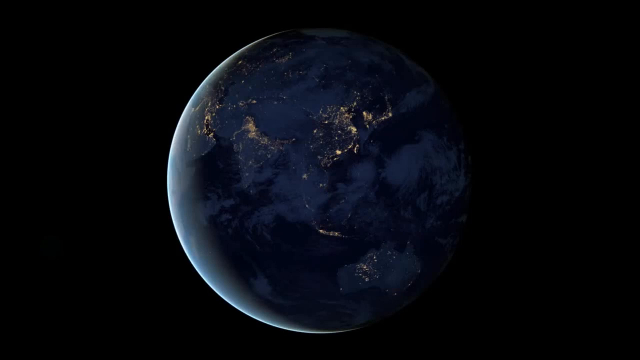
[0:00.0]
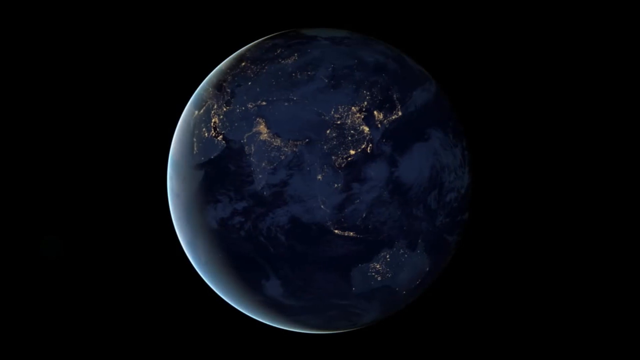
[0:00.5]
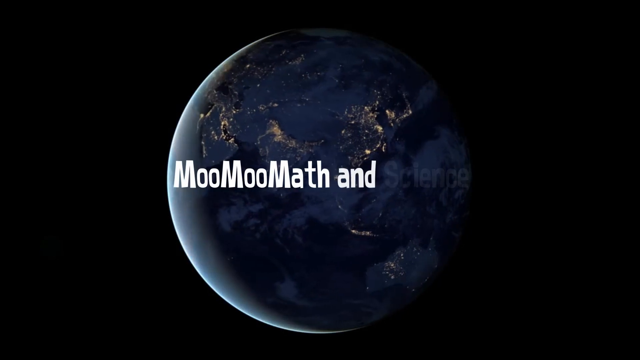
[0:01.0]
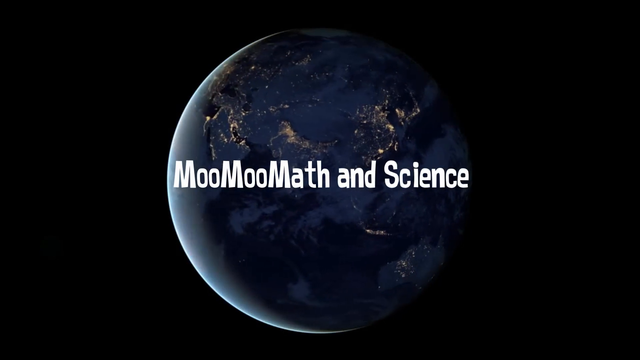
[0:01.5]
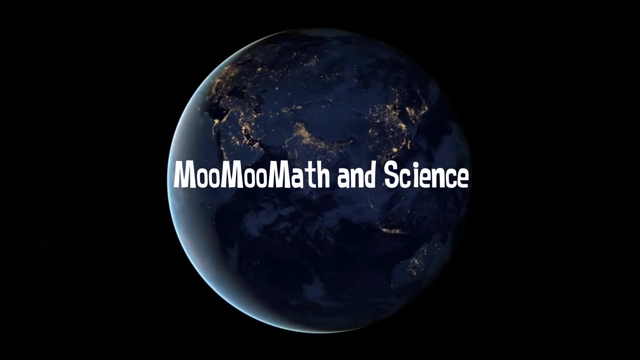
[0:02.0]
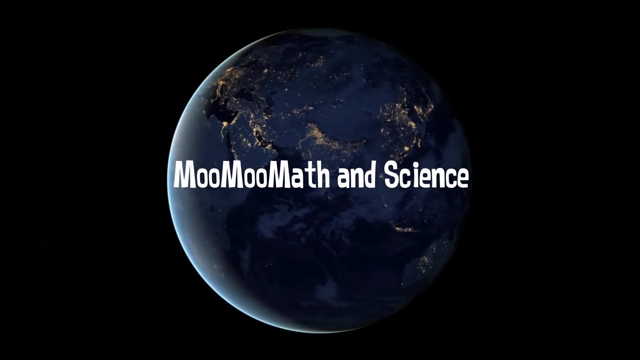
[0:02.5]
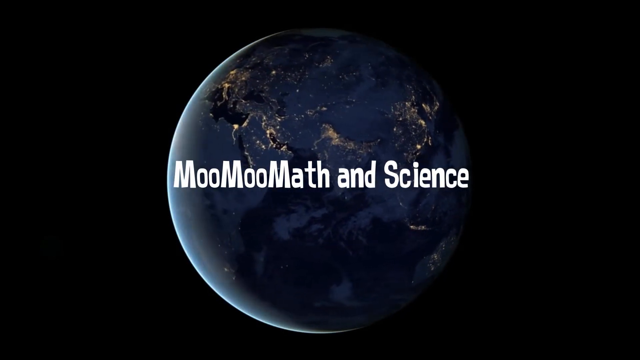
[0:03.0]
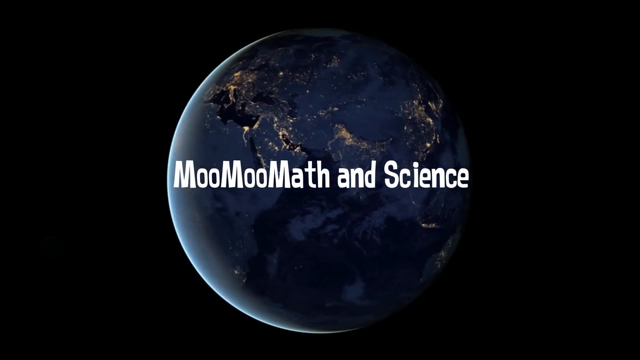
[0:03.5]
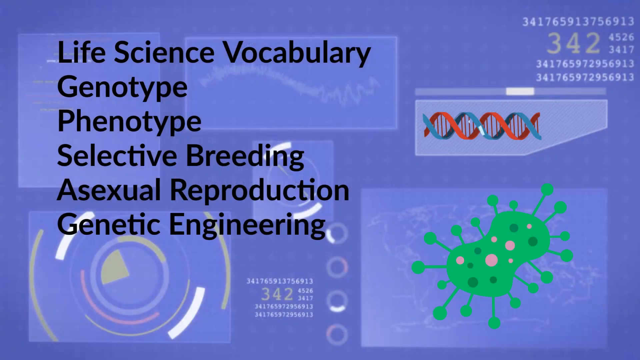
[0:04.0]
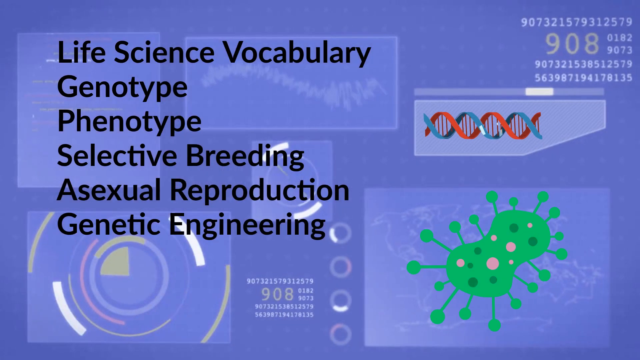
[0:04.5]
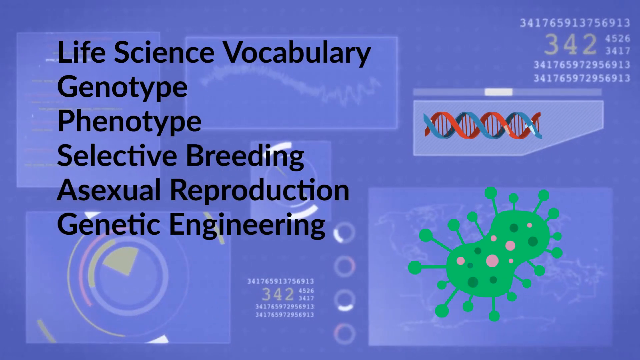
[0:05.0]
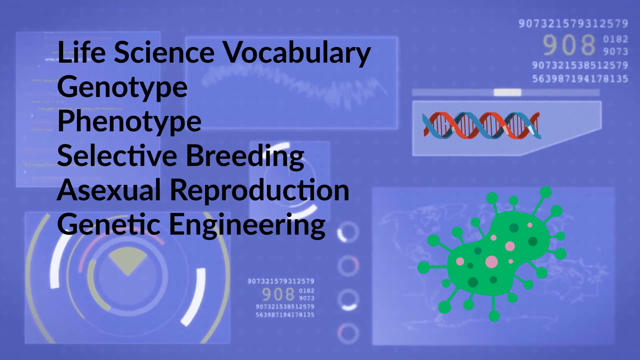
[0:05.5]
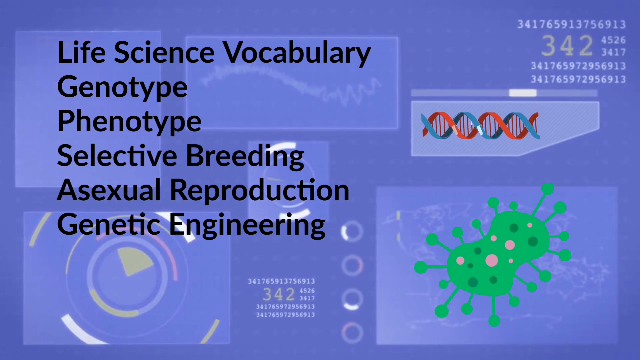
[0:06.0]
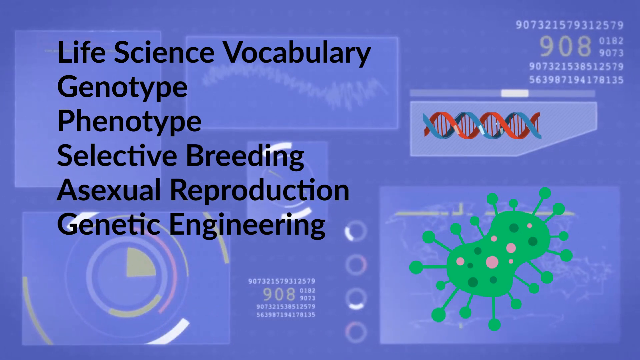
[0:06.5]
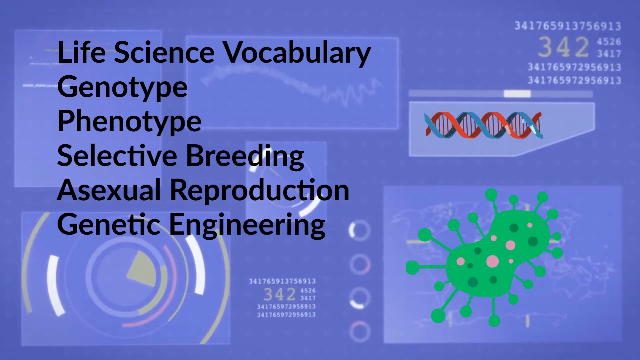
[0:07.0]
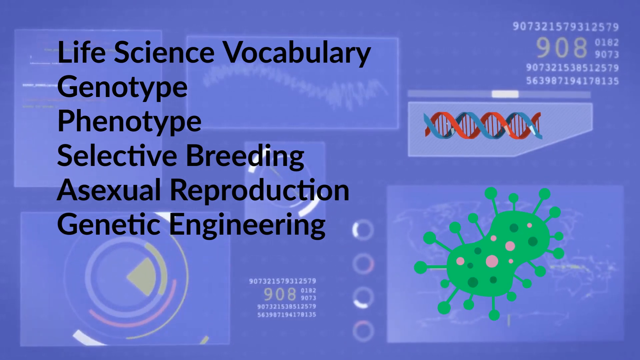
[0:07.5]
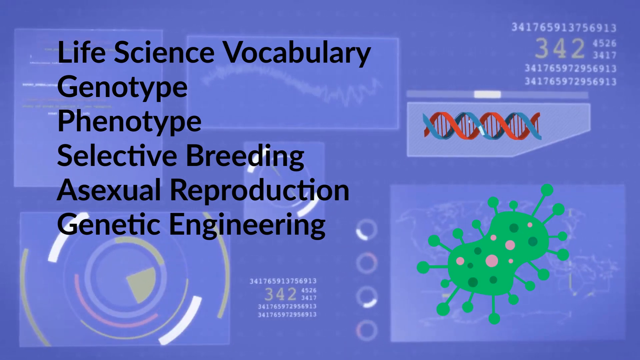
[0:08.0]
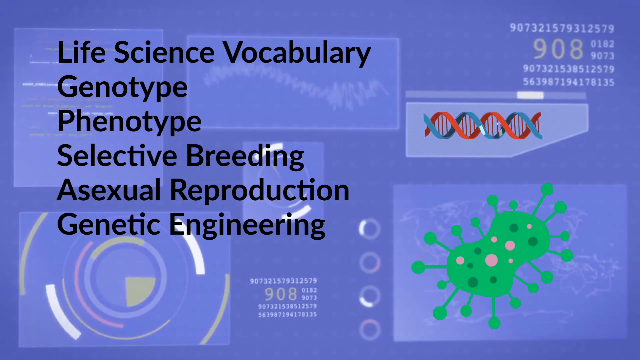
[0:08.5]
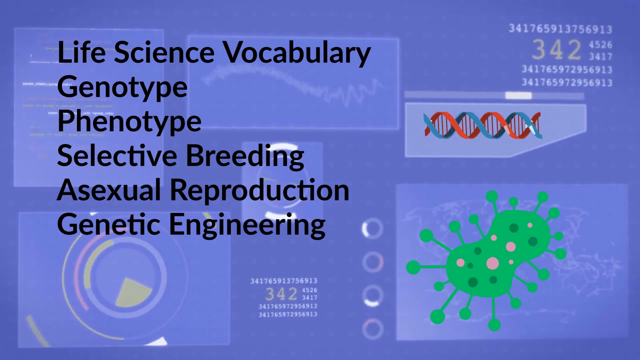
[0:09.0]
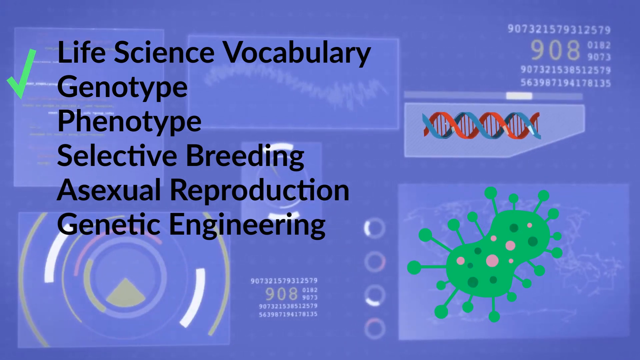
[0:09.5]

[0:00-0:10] The video shows the terms genotype, phenotype, selective breeding, asexual reproductions and genetic engineering. Images such as DNA structures appear, and the video shows the world, the planet. A lot of information follows.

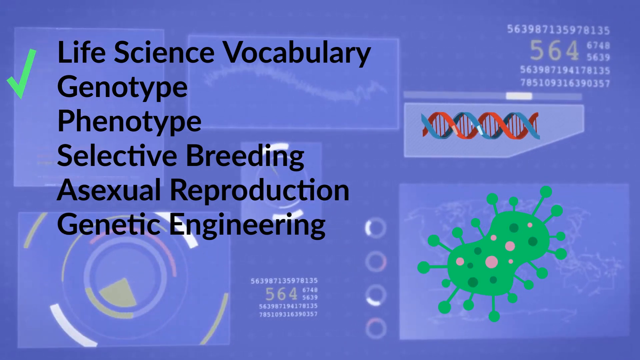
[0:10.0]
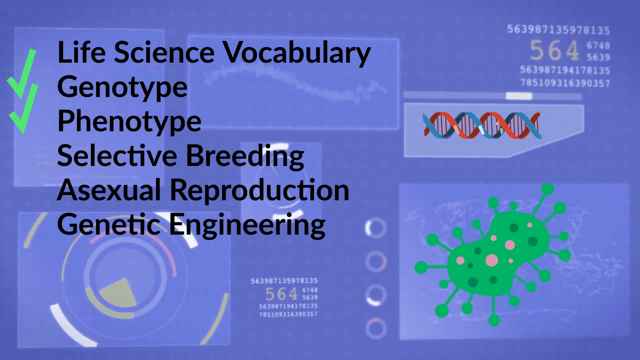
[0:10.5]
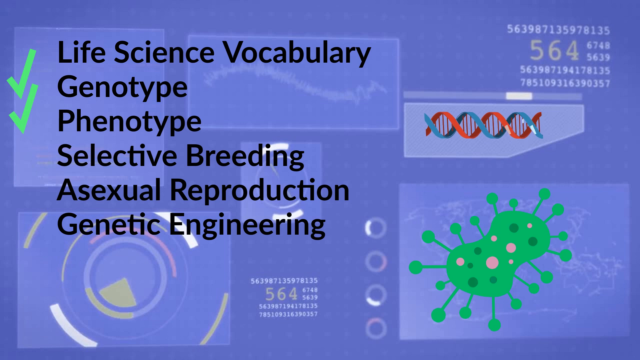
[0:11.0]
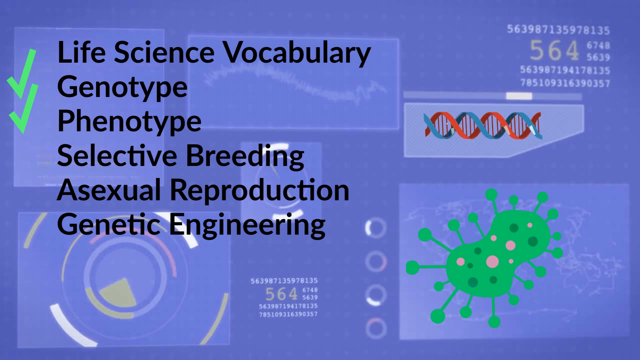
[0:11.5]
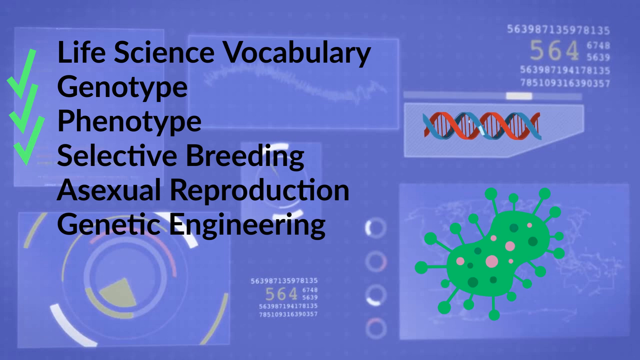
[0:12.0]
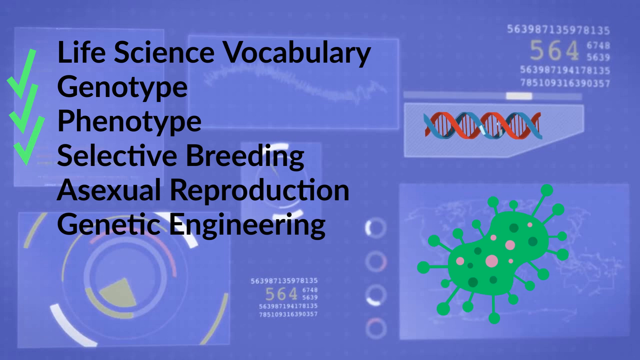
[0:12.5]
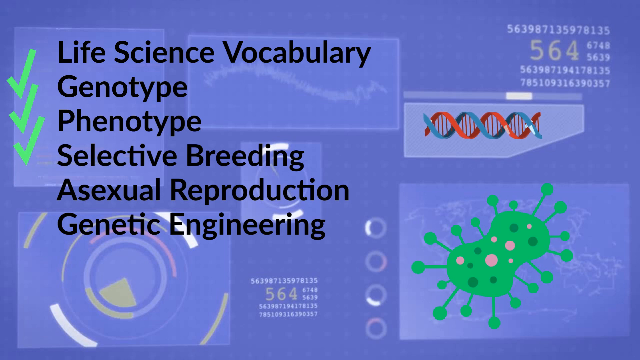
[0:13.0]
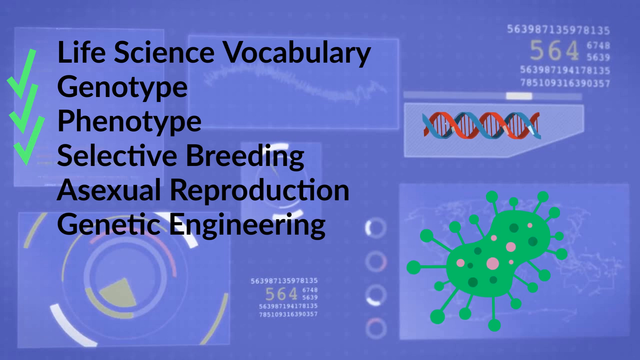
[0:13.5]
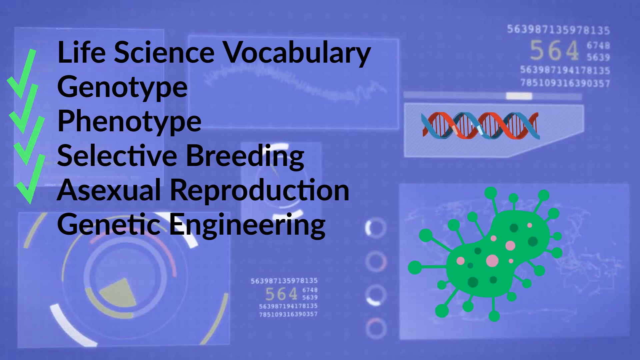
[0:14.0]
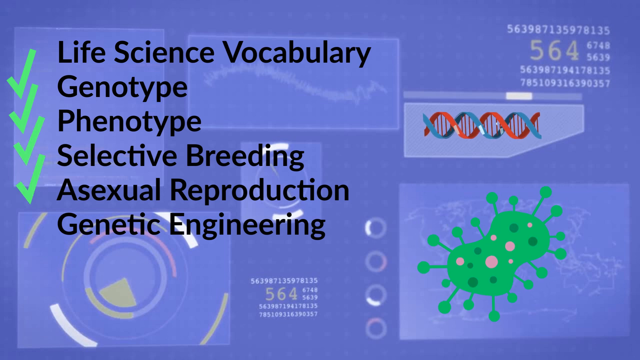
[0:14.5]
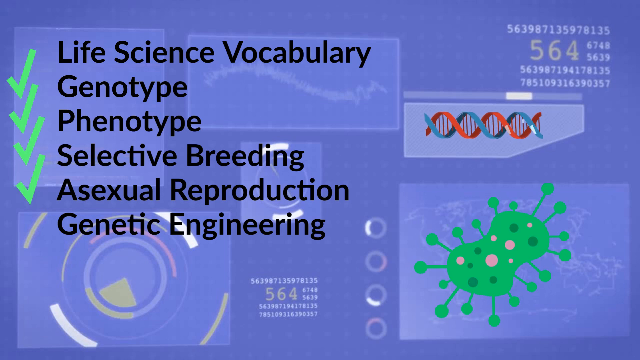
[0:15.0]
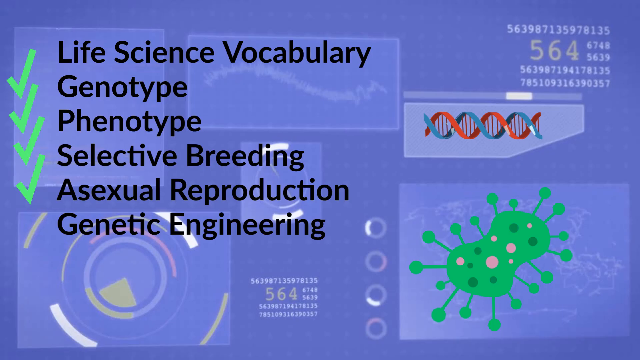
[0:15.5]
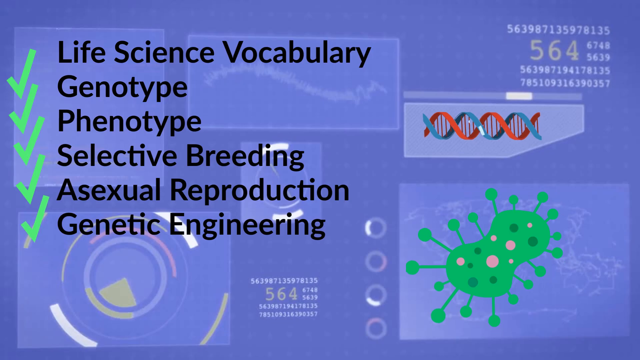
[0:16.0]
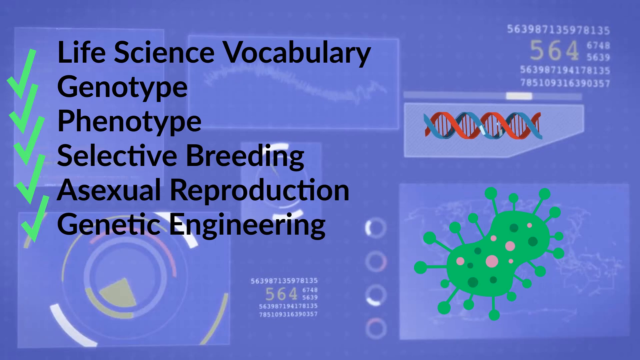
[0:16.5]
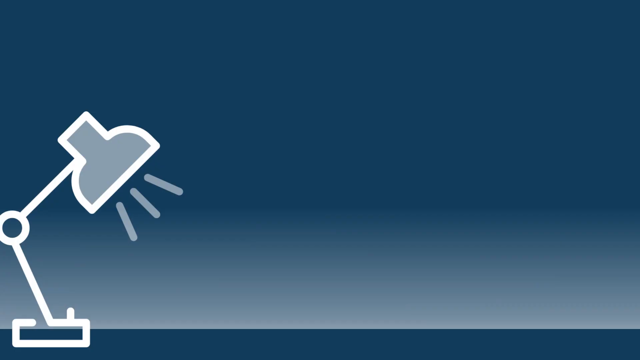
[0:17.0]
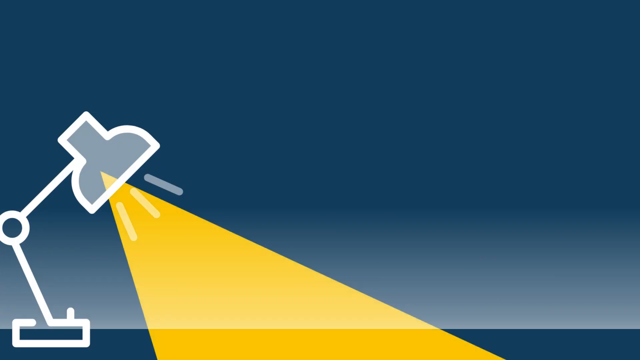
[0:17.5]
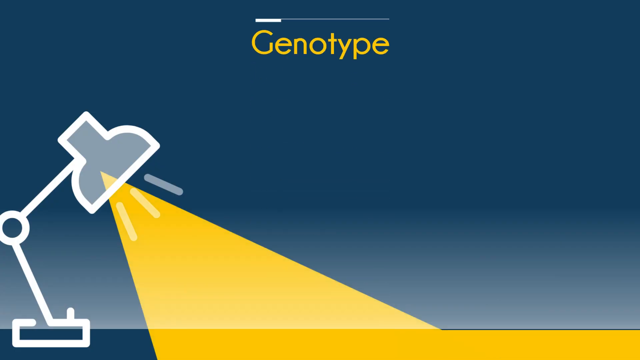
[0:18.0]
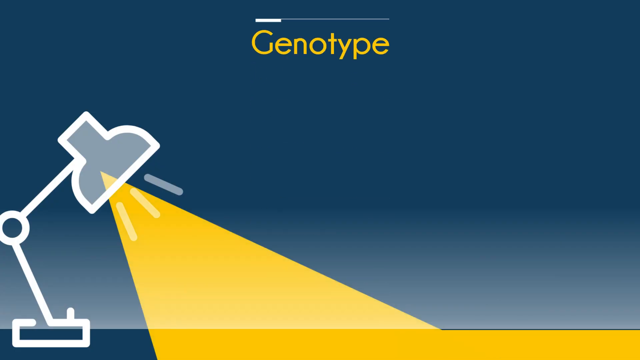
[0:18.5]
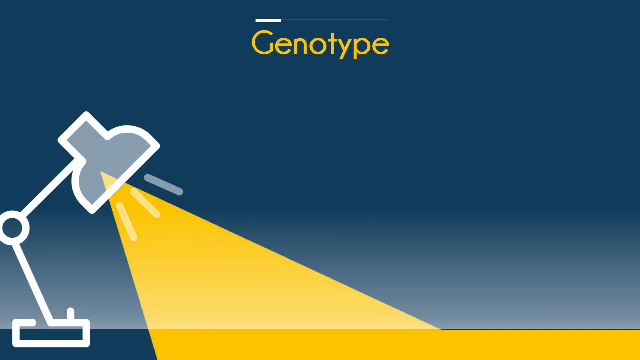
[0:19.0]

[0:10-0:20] The video shows life science vocabulary: genotype, phenotype, selective breeding, asexual reproduction and genetic engineering, along with some scientific information.